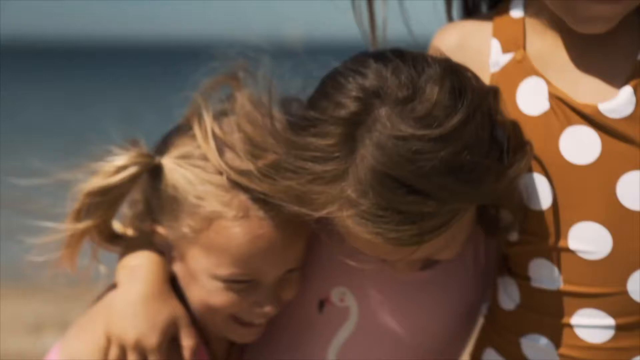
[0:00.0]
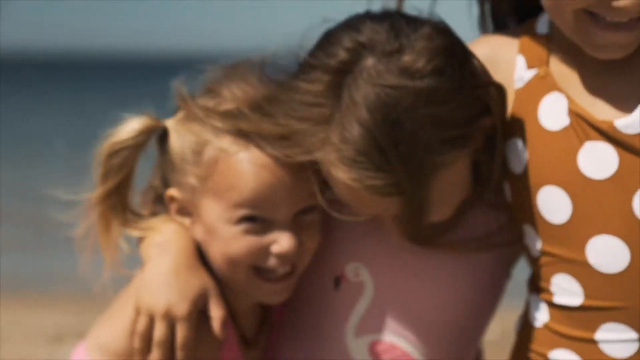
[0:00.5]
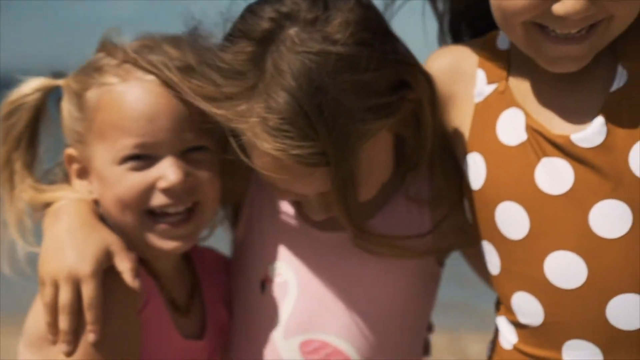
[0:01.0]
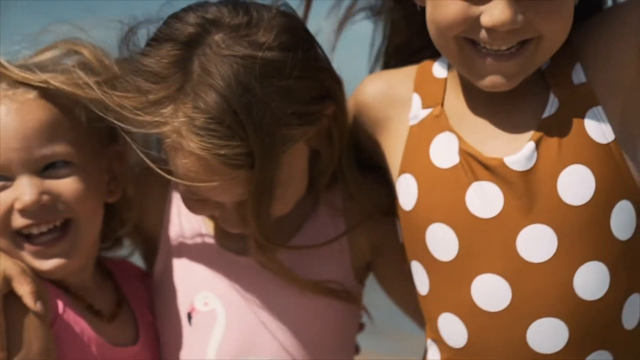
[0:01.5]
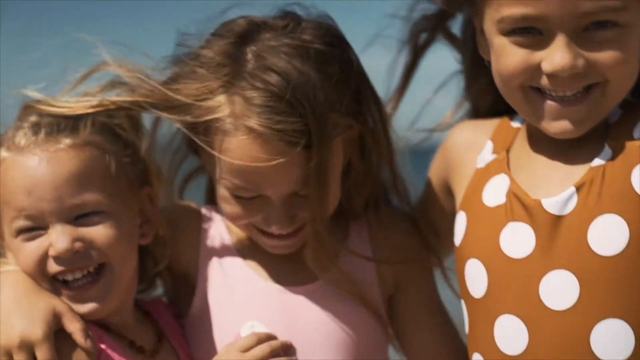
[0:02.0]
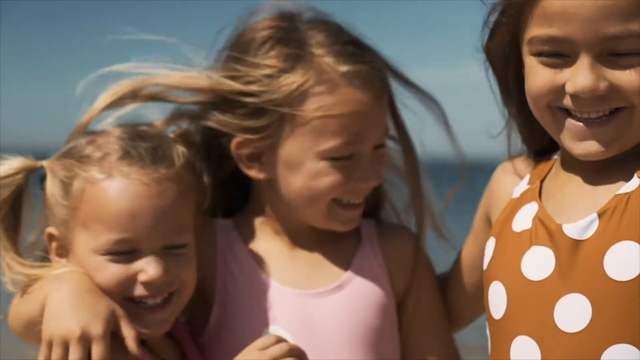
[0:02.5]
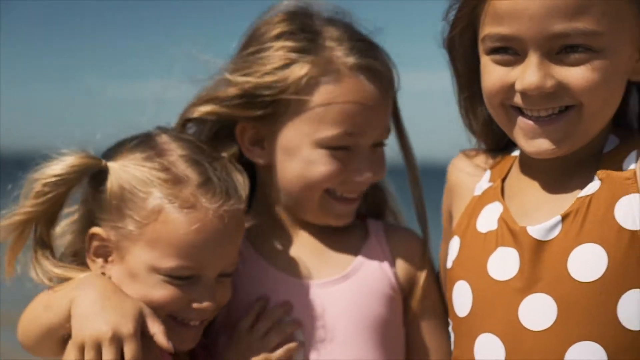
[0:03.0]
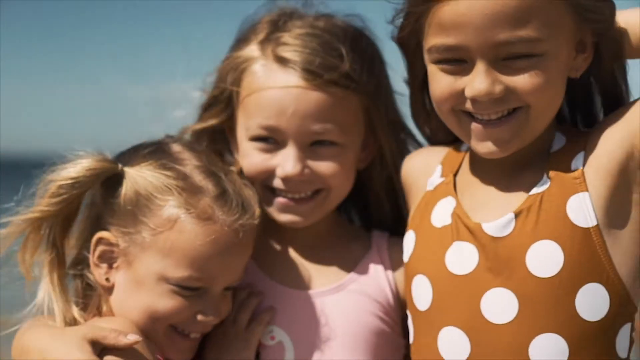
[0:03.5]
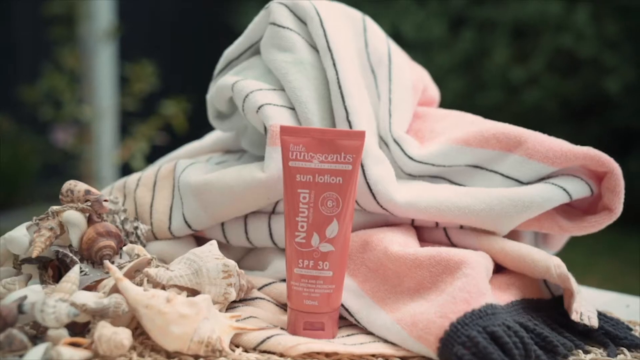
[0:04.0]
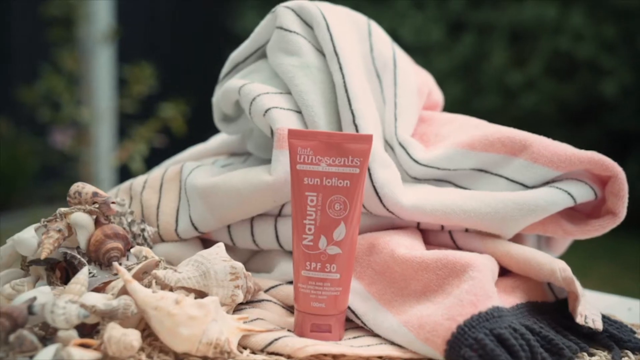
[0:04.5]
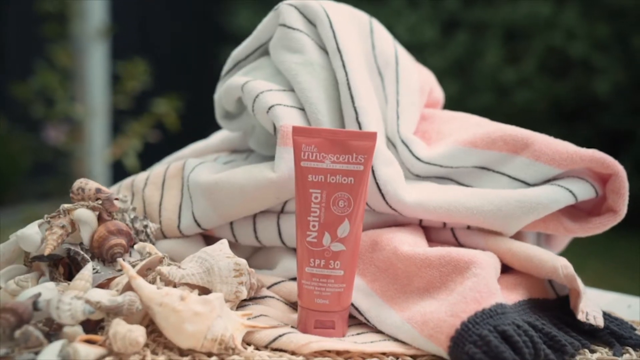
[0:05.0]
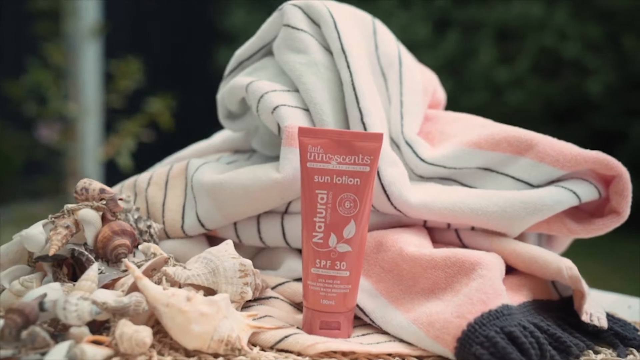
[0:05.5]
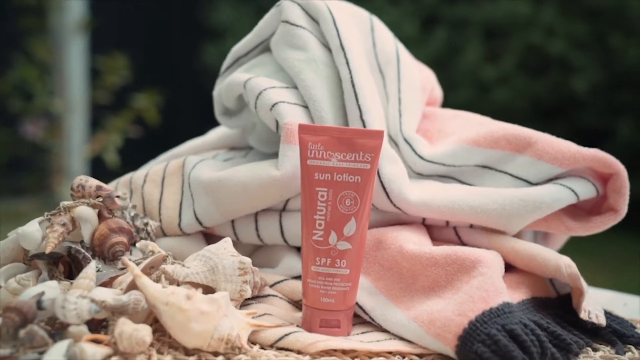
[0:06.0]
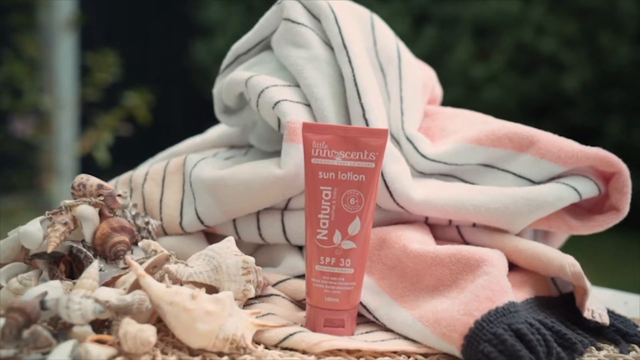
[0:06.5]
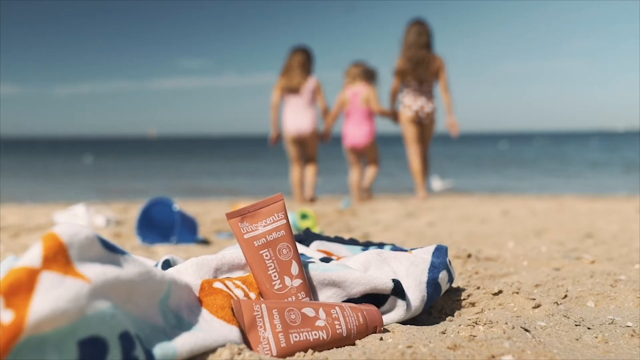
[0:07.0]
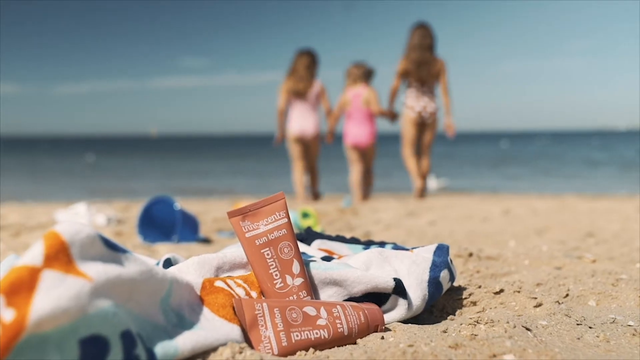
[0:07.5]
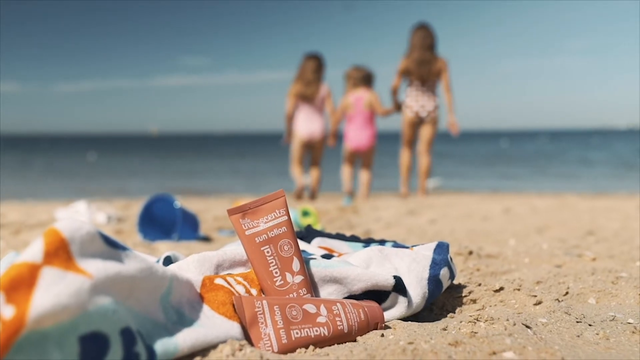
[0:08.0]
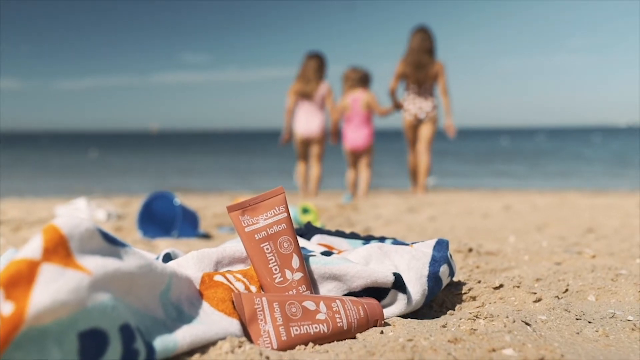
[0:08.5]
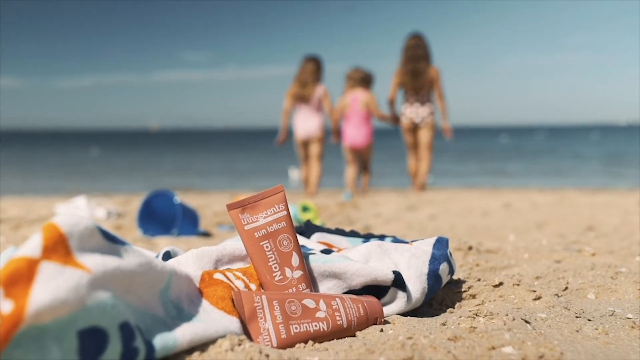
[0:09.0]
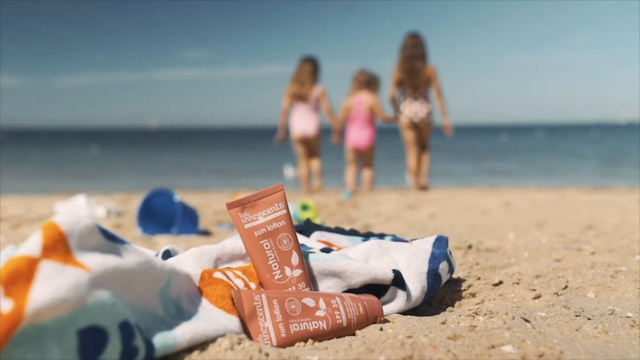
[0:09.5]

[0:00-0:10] Three little girls, all wearing swimming costumes, are at the beach; they look very happy and have their arms around each other. The next scene shows their towels and the things they have brought to the beach, along with a cream that looks like sun cream, though this is not certain; it is clearly meant for children. The children then run down the beach in the sun to the shore, presumably after using the cream, which the video appears to be advertising. It is very windy, and the blue sea is visible in the background.